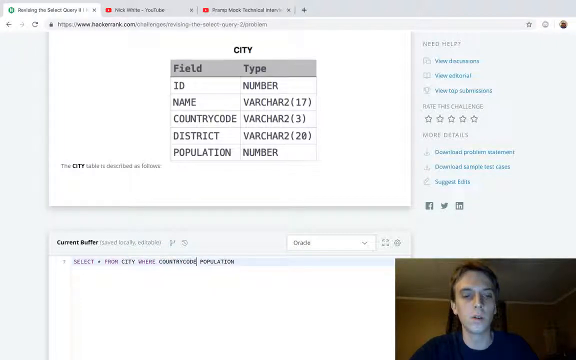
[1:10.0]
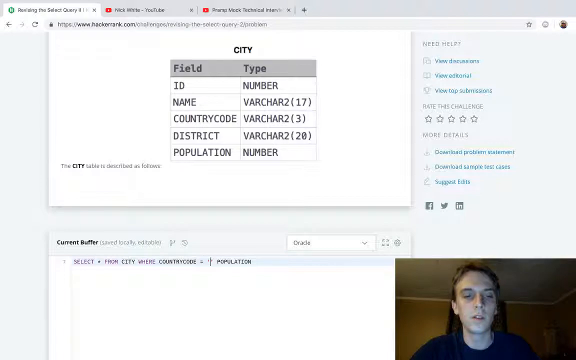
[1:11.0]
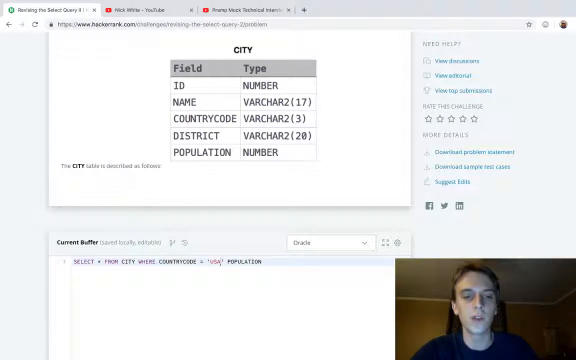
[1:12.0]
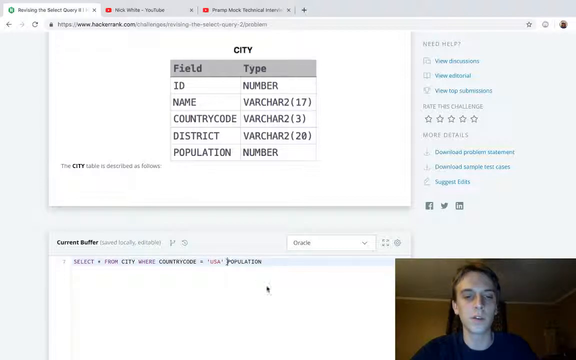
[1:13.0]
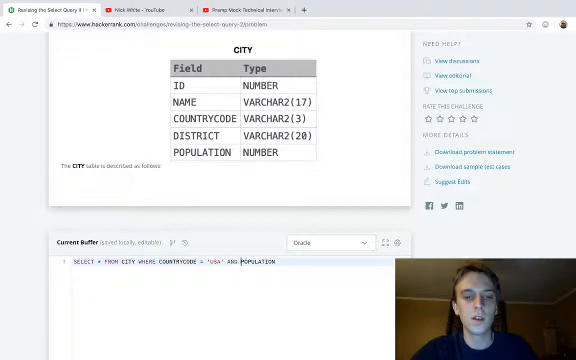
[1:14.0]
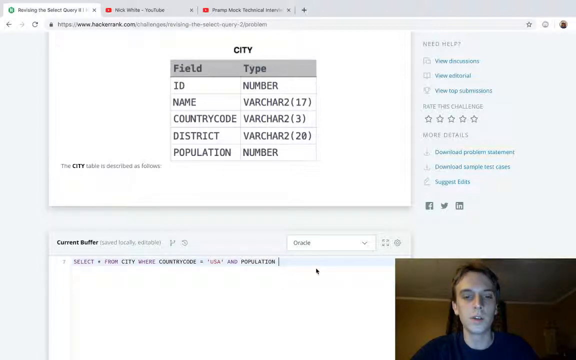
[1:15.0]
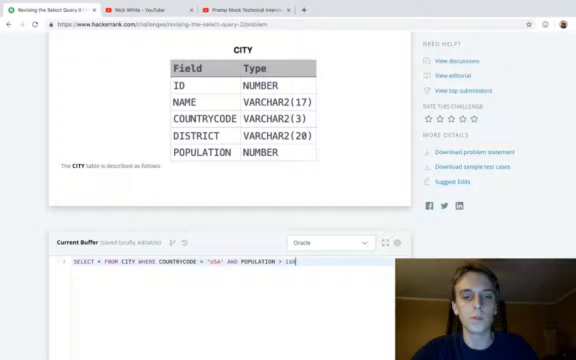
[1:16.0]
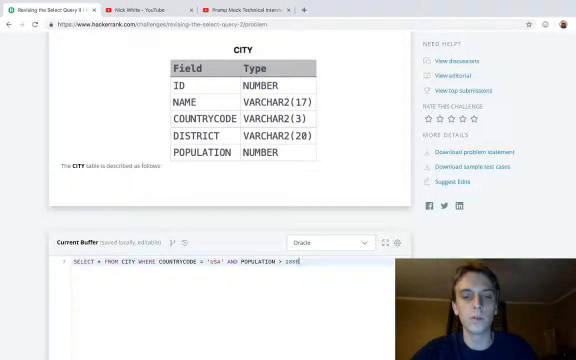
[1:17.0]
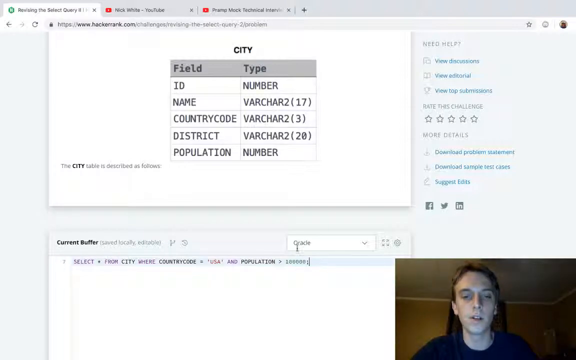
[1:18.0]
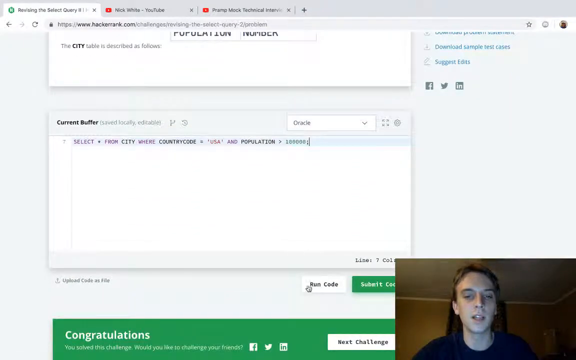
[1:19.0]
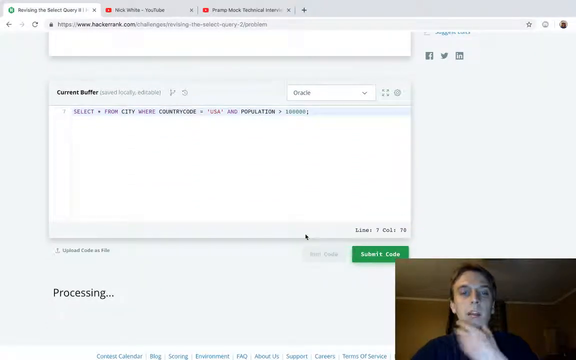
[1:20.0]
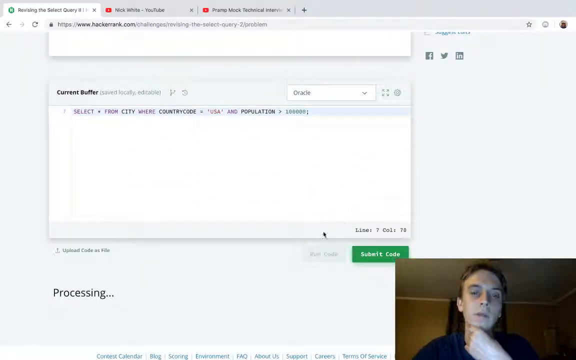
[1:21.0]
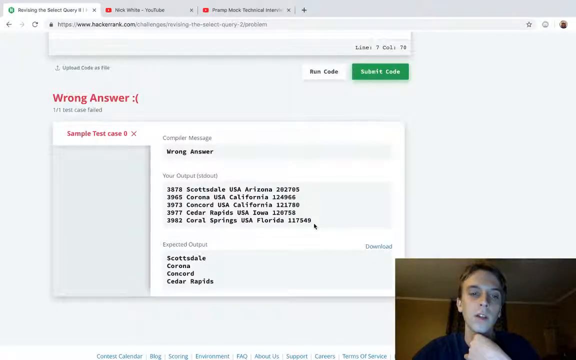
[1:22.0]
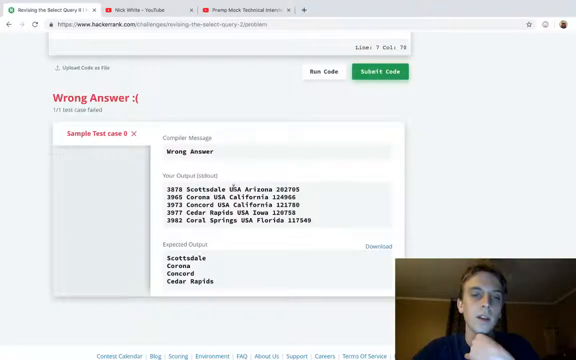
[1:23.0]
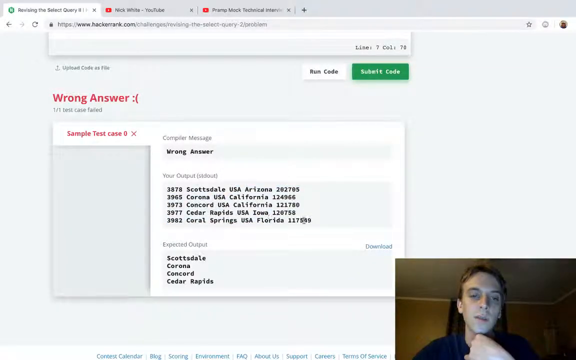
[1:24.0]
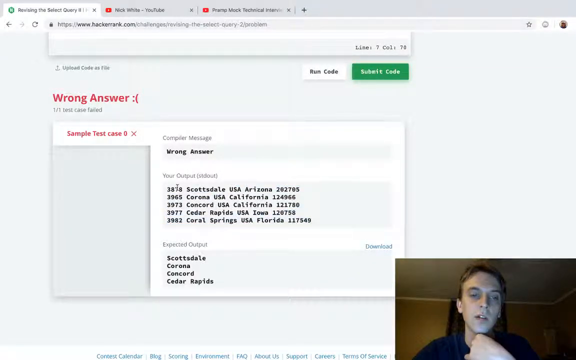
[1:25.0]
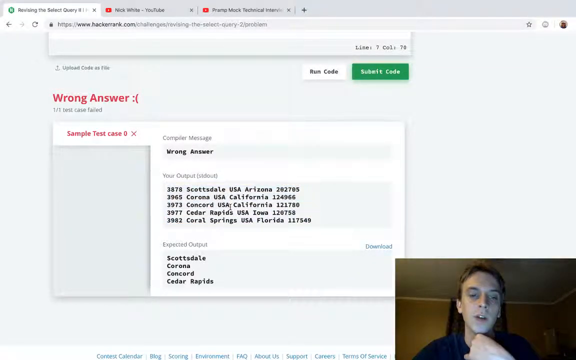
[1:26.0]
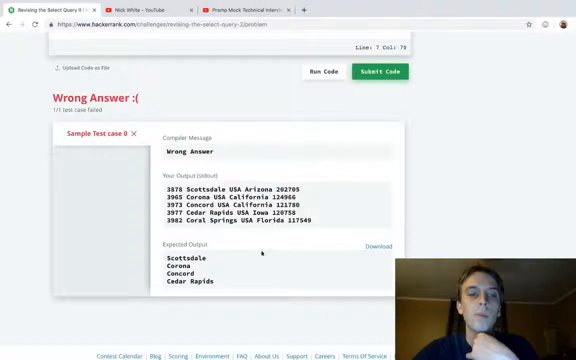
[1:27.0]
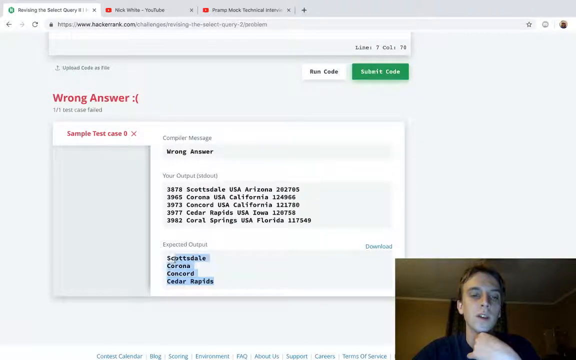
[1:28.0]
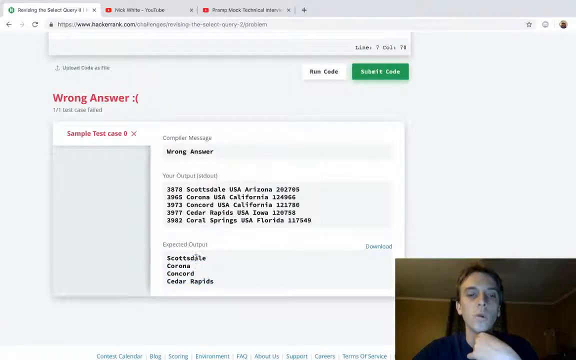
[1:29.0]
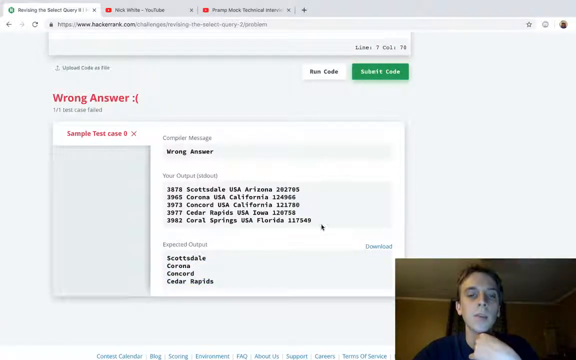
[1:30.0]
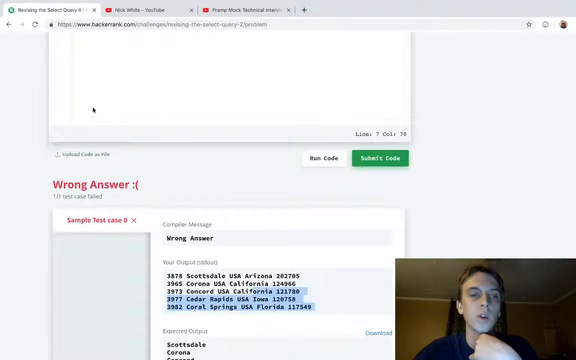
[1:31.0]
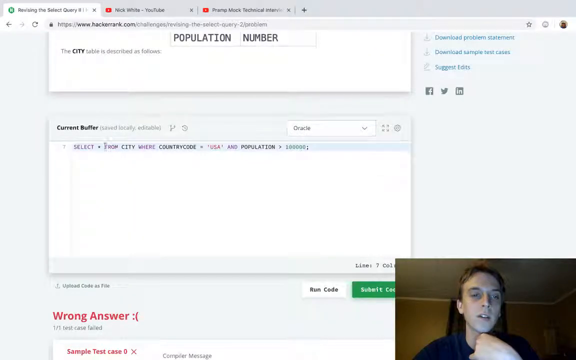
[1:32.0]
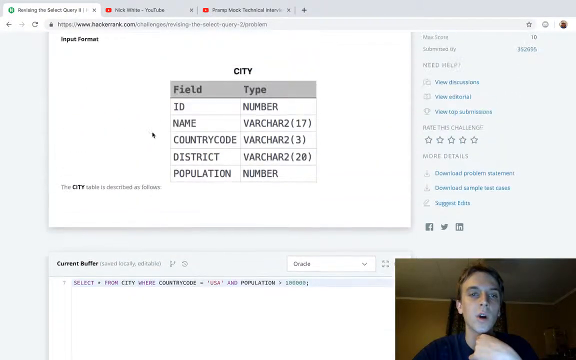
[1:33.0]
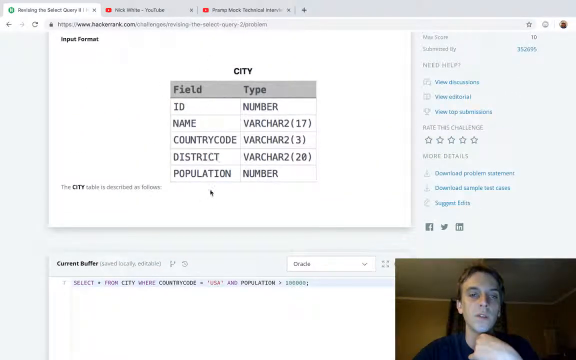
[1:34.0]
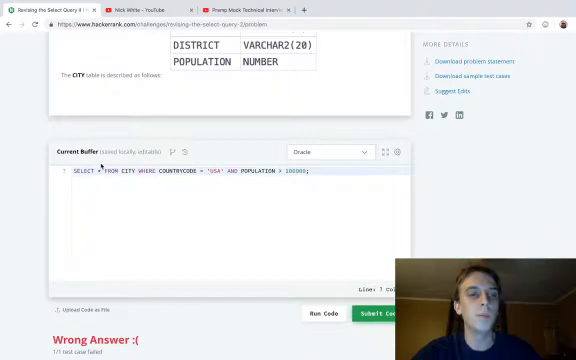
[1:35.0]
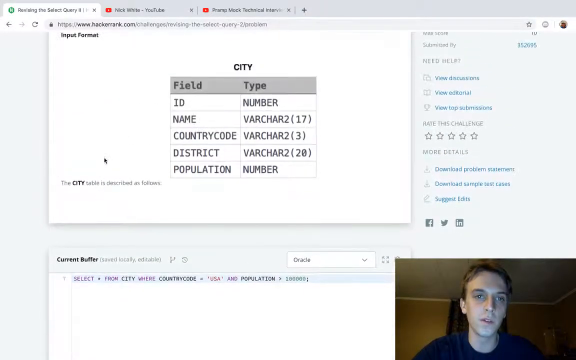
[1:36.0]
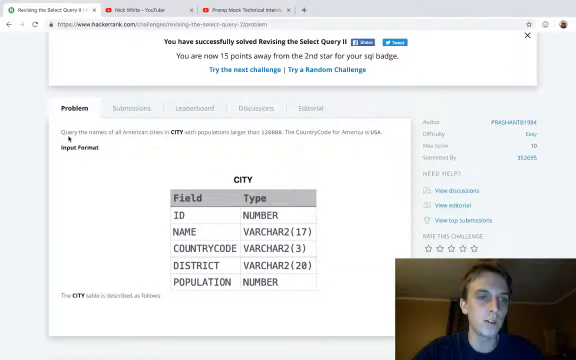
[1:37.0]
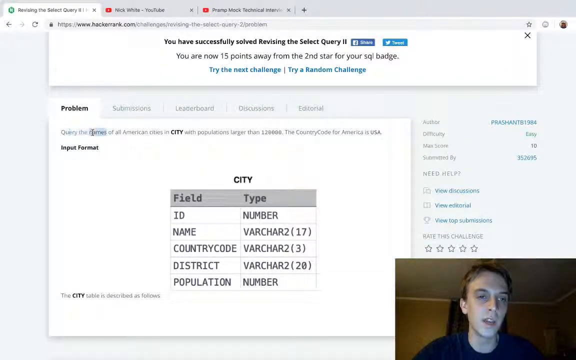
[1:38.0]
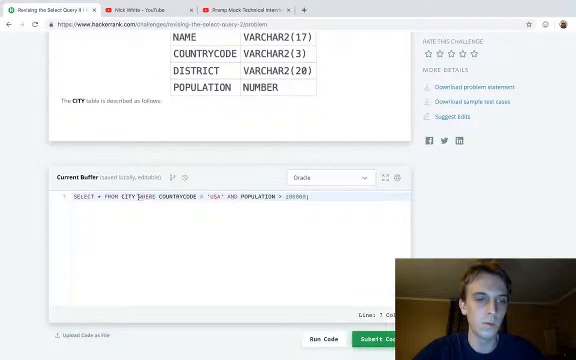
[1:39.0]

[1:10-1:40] The man continues typing in the box; the word "population" and the words "select from city country code" are visible. Something processes, a new answer appears, and it shows "wrong answer" in red. He looks at the wrong answer tab, scrolls back up and looks at the country code information, apparently trying to figure out what he did wrong. He highlights some sections, goes back down and types again. There are numbers, something about a USA country code, and responses listing country codes for Scottsdale, Corona, Concord and other cities, along with an expected output. He then apparently moves back down to rework the answer.